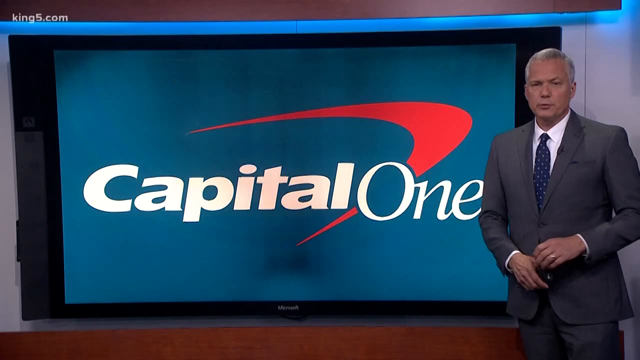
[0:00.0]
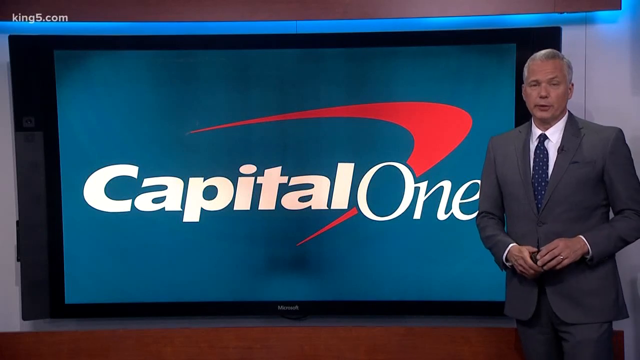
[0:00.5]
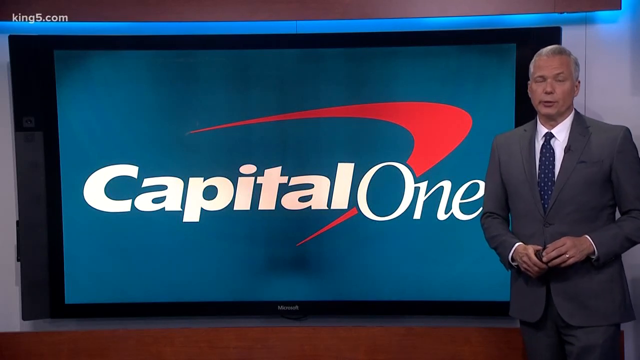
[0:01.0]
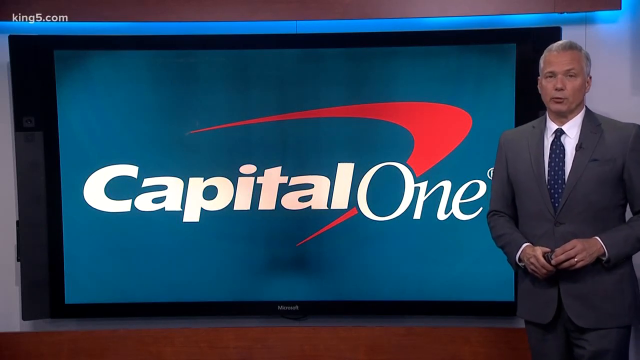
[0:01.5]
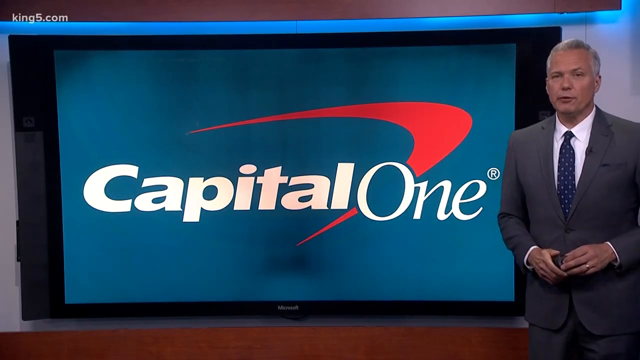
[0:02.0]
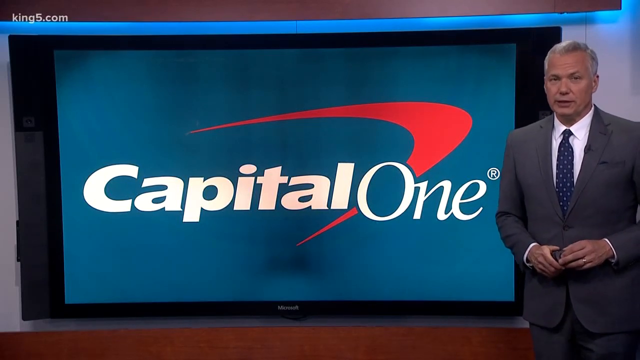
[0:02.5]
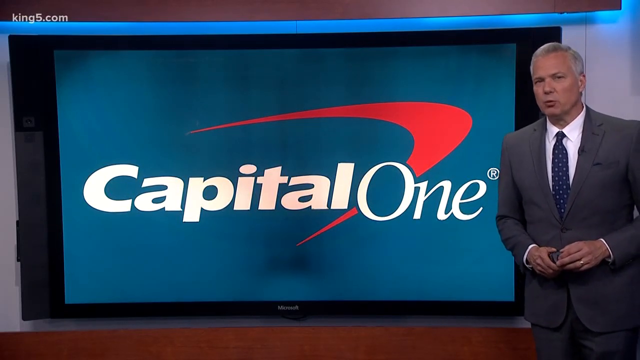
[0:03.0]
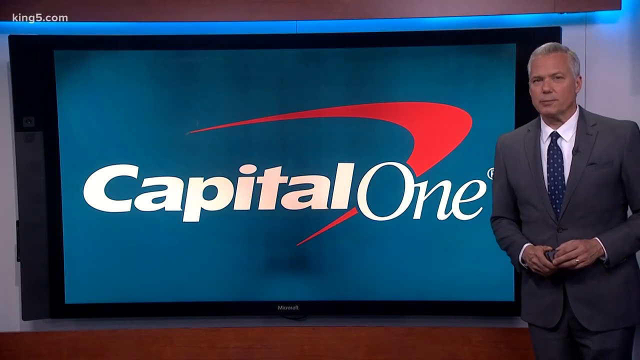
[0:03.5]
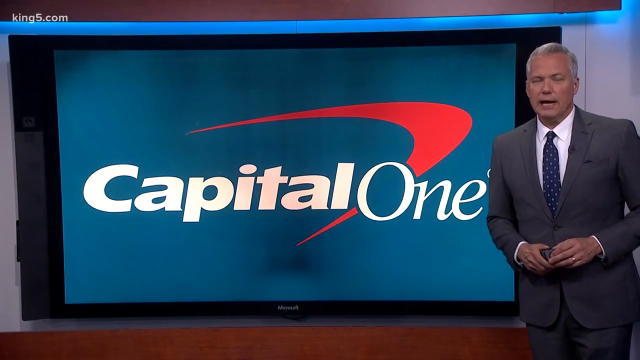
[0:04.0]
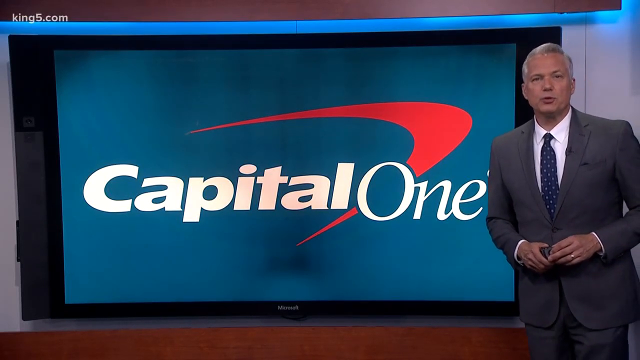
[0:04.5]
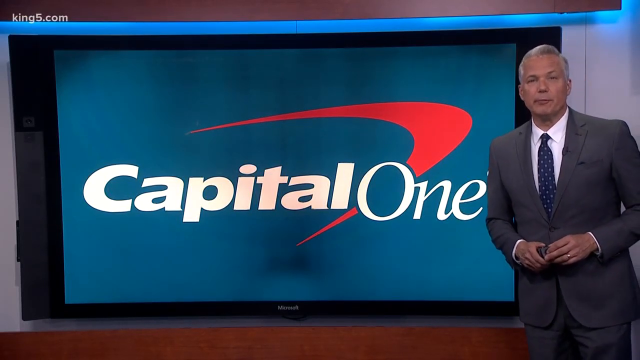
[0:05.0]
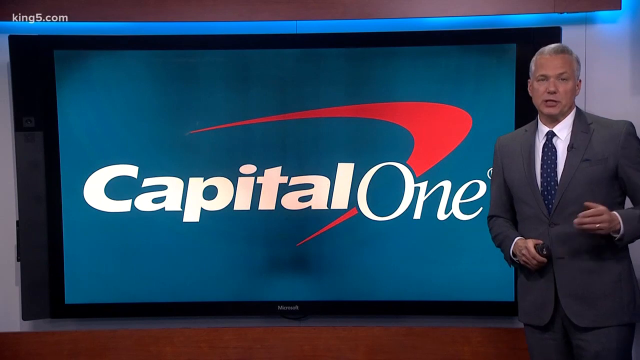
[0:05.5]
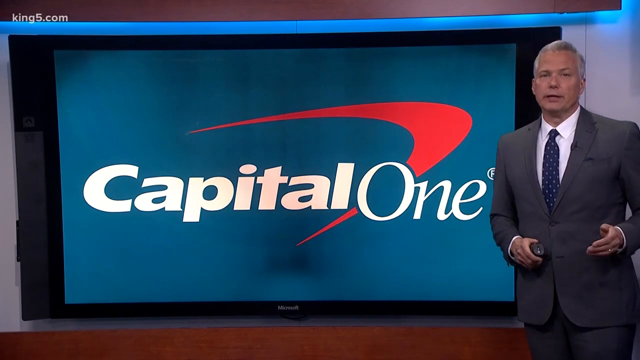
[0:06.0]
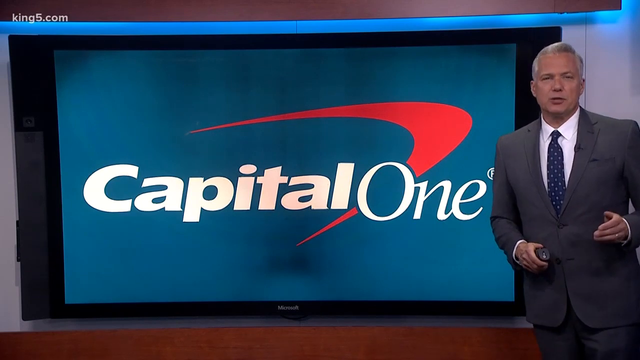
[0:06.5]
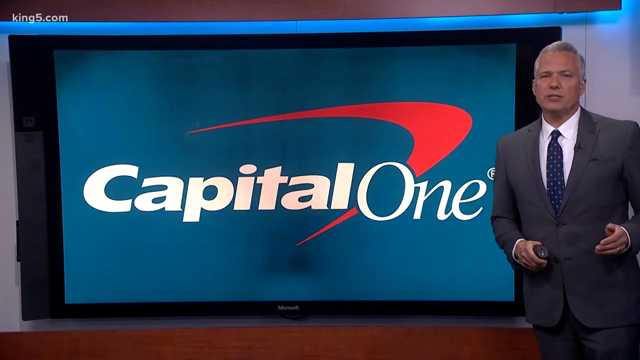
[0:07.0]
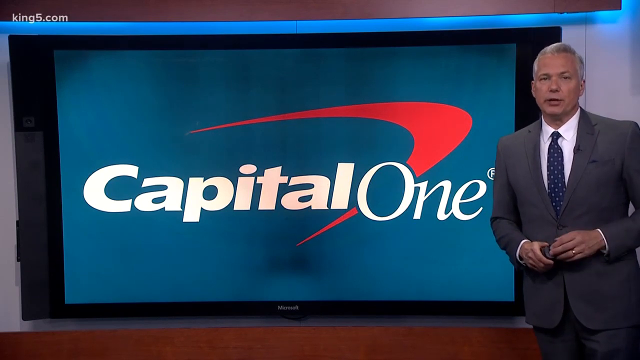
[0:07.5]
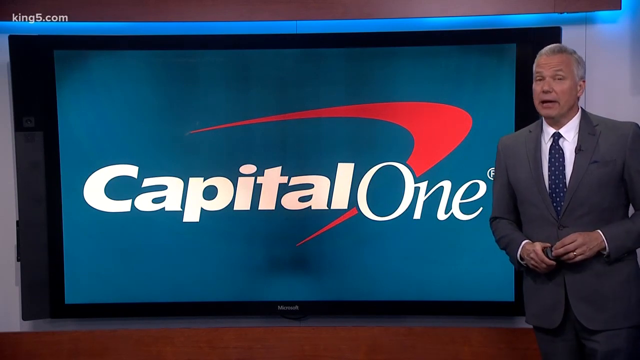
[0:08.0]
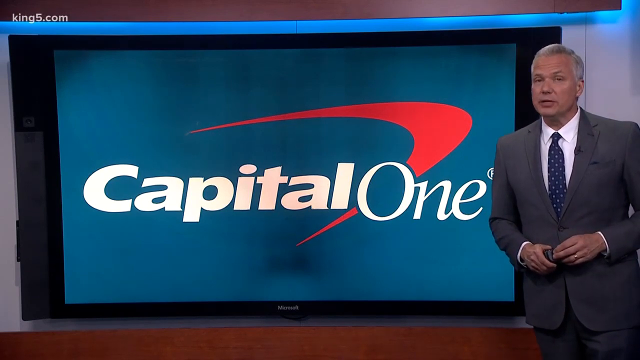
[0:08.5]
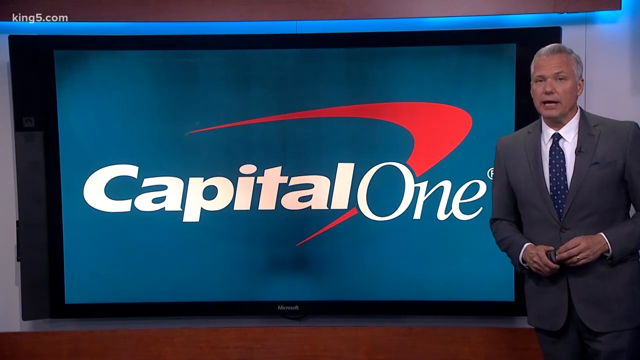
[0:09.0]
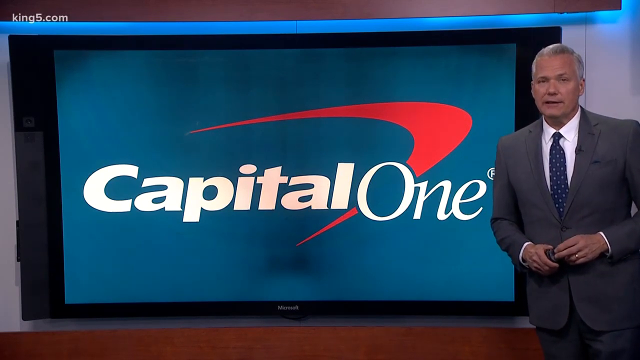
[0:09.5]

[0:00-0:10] The video opens on a digital screen with a blue background and the words "Capital One" in white letters. A red boomerang goes through "Capital One" and looks as if it is being thrown to the right. At the far right of the screen a news anchor is standing. He is an older middle-aged white man with gray hair, wearing a gray or brown suit, a navy blue polka-dotted tie and a white button-down collared shirt. He holds some type of news device, likely one that transfers or transitions the screens.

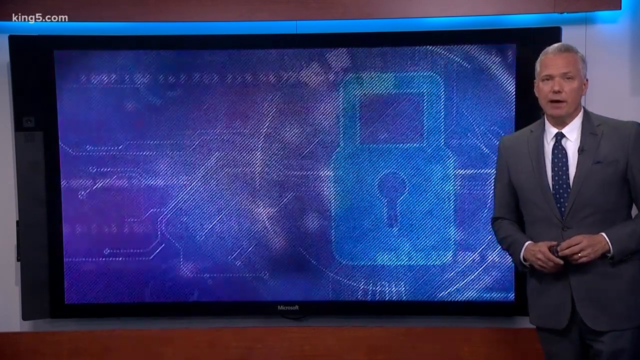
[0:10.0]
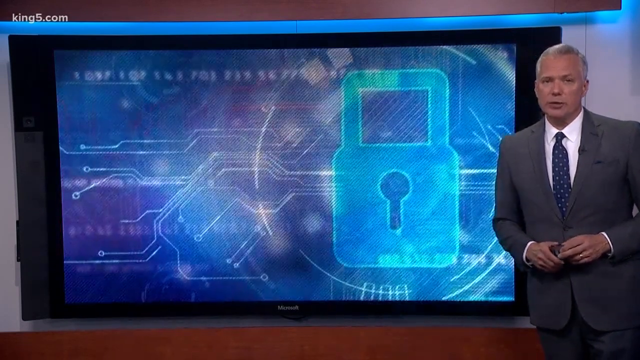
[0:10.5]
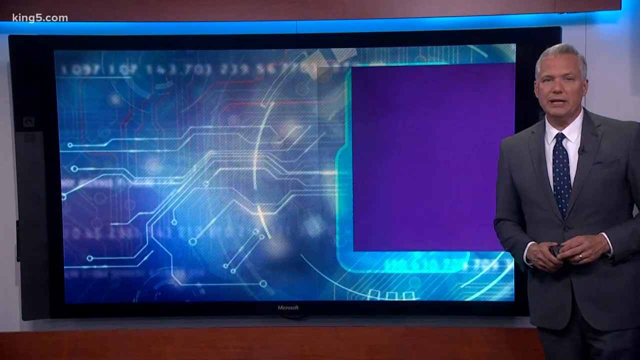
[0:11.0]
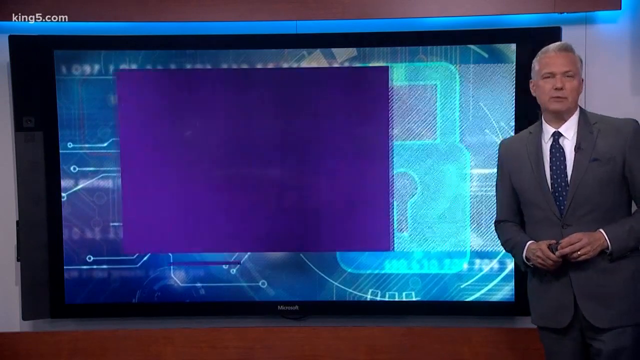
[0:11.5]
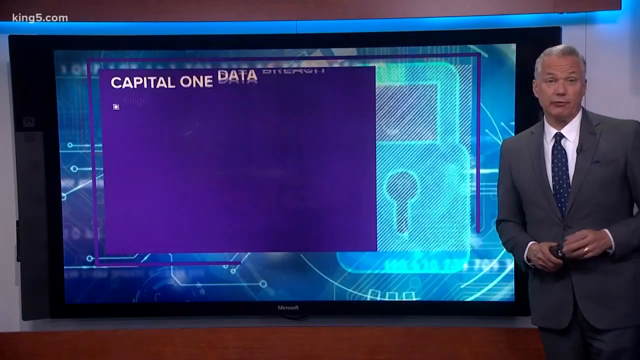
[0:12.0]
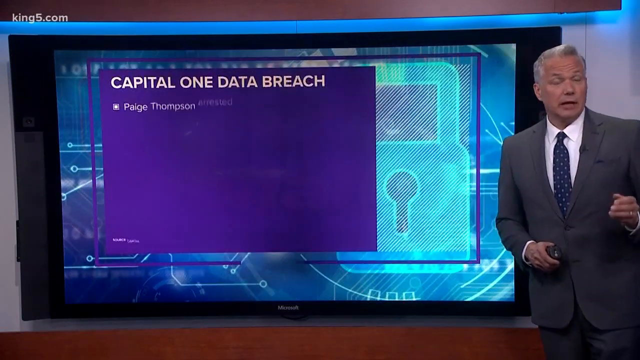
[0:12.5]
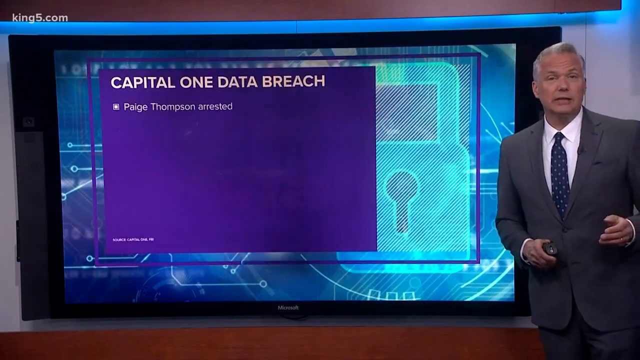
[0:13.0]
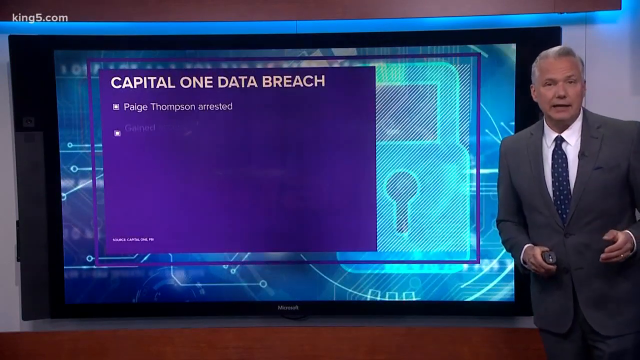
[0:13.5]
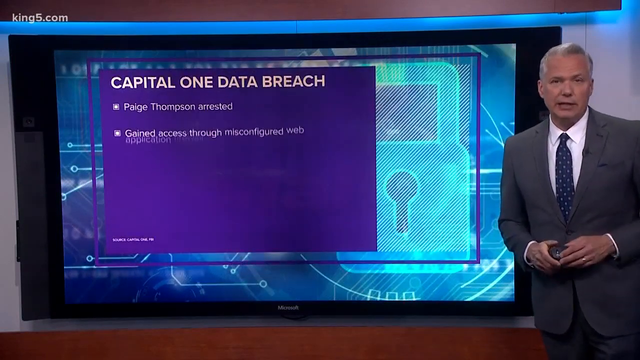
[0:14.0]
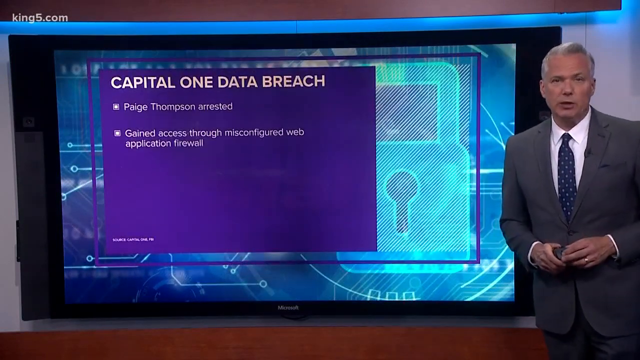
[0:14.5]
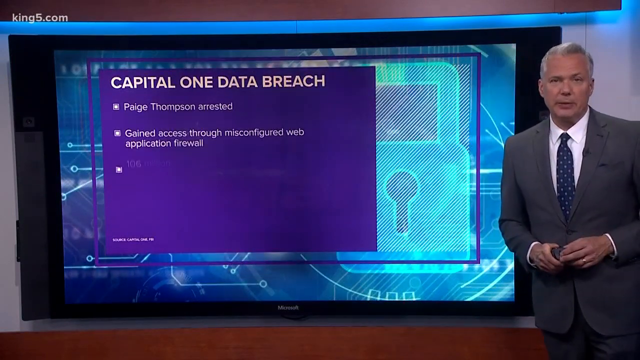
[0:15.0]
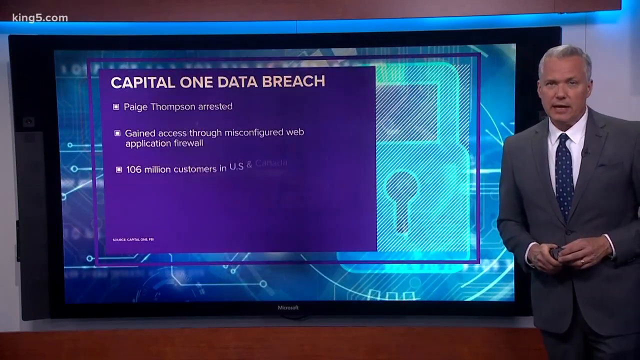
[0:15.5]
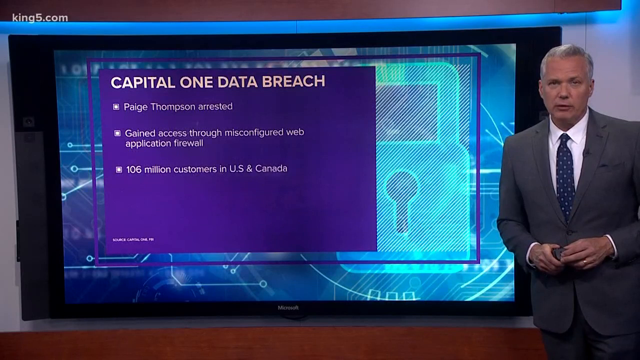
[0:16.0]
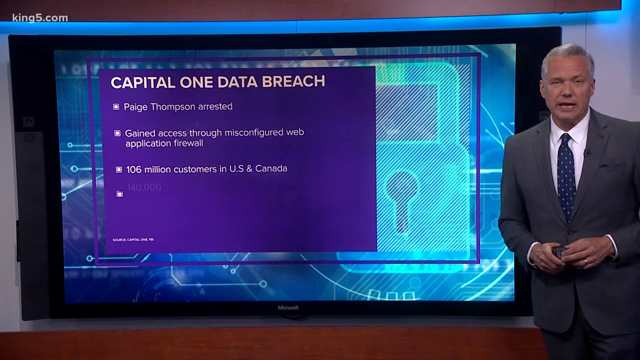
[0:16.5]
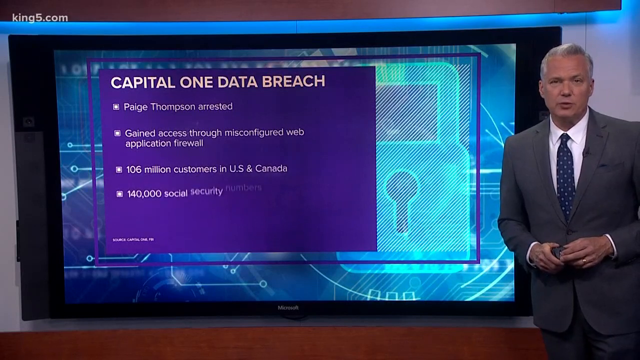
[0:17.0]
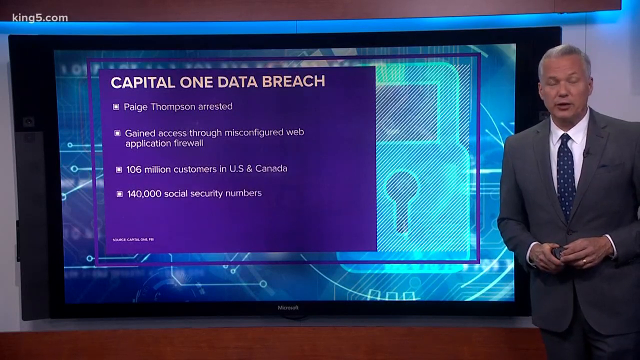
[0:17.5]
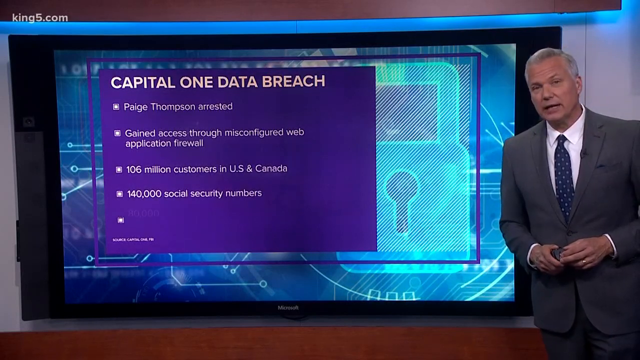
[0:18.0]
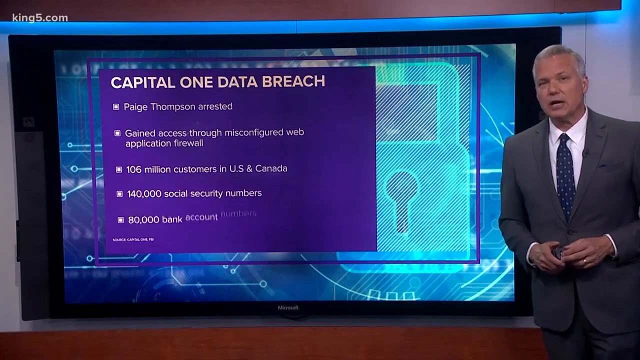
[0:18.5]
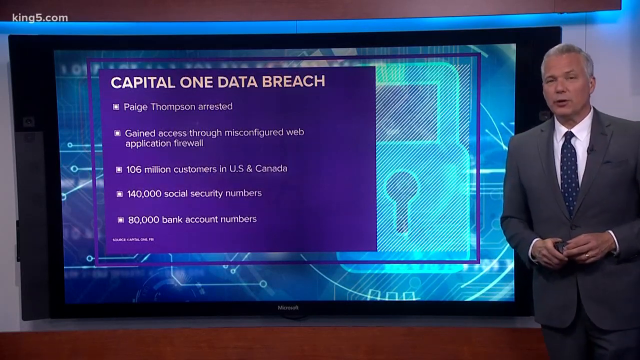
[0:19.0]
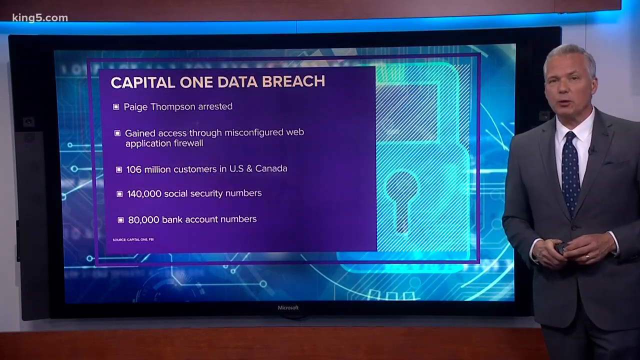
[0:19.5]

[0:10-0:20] A digital screen with a dark blue background shows what appears to be an image of a lock with a keyhole on its right side. At the far right of the screen a news anchor is standing: an older middle-aged white man with gray hair, wearing a gray or brown suit, a navy blue polka-dotted tie and a white button-down collared shirt. He holds some type of news device that transitions the screens. A blue square appears from the right of the screen and zooms to the far left. Inside it, in white letters, is written "Capital One Data Breach", with sub-headlines underneath.